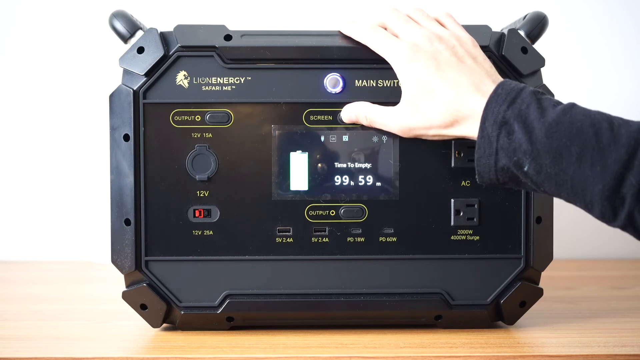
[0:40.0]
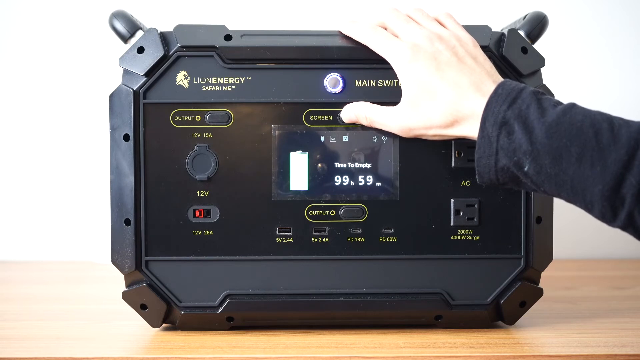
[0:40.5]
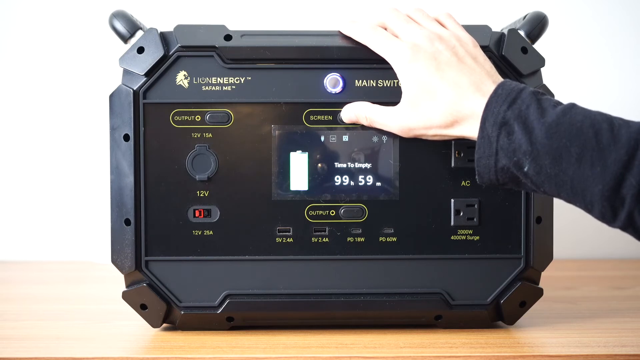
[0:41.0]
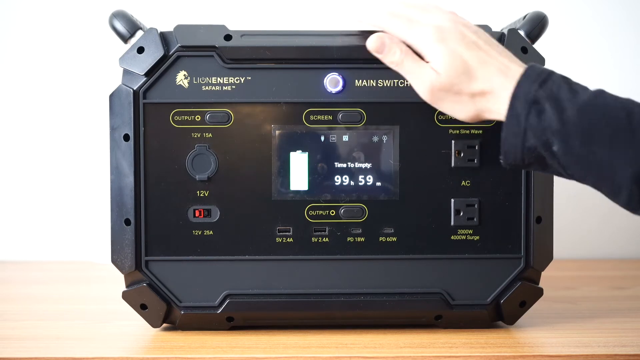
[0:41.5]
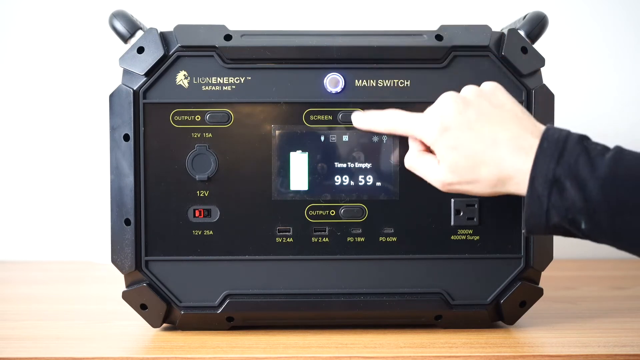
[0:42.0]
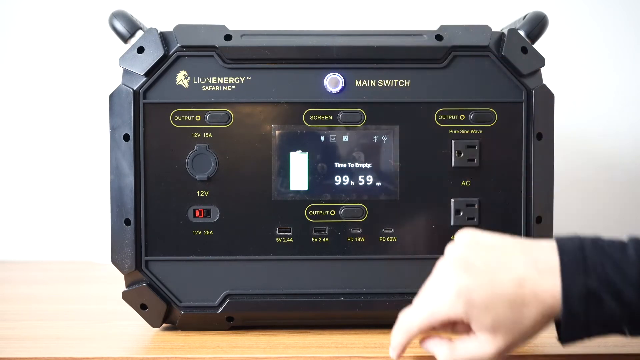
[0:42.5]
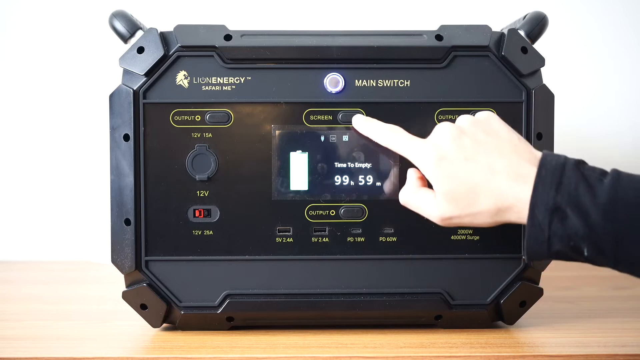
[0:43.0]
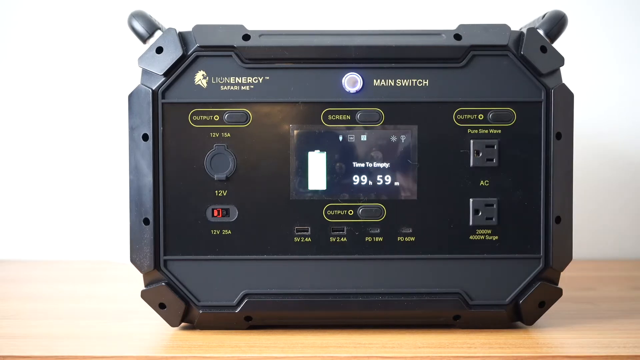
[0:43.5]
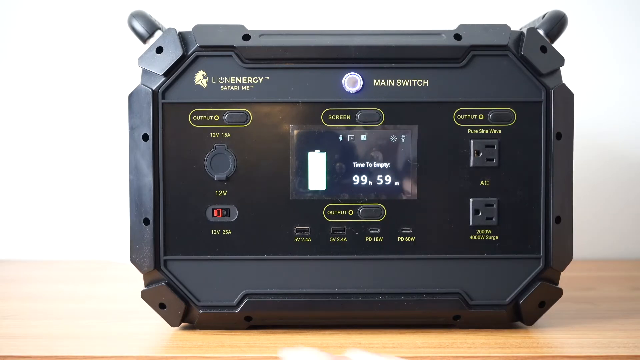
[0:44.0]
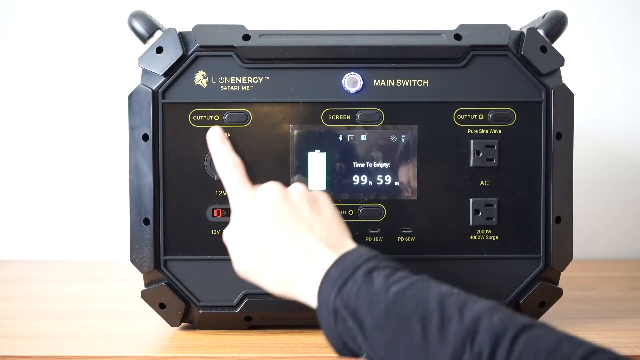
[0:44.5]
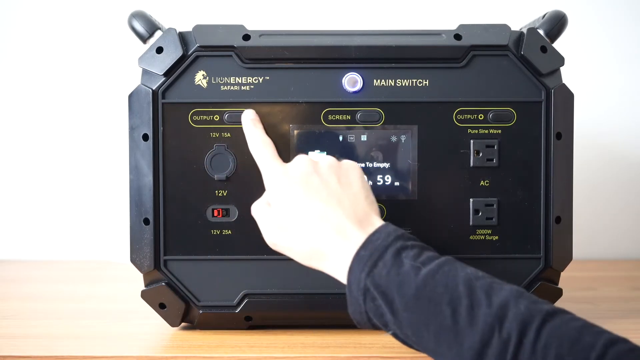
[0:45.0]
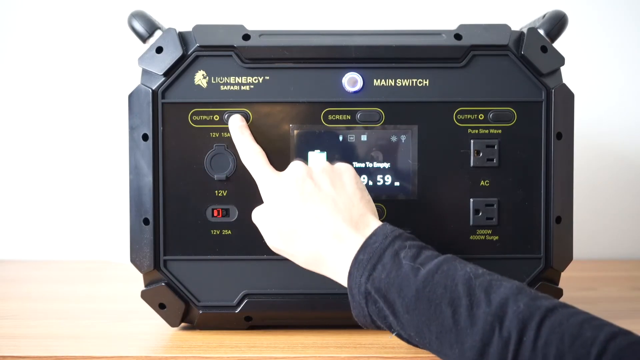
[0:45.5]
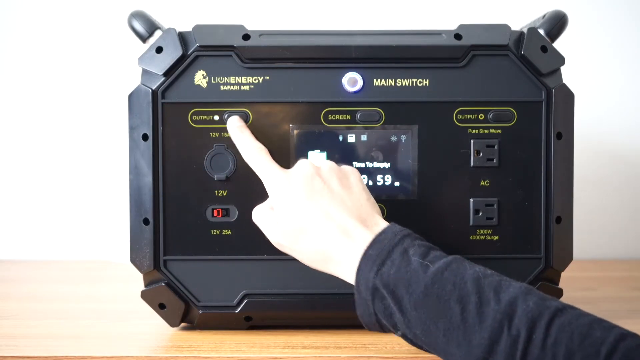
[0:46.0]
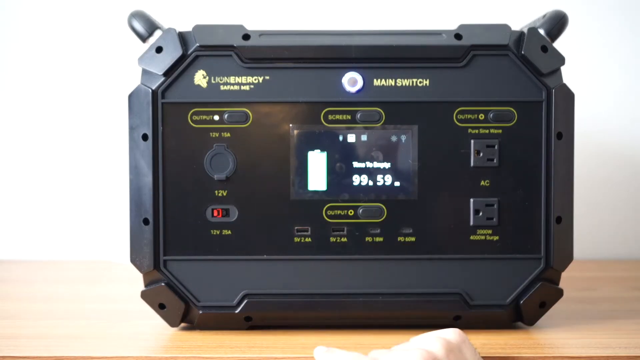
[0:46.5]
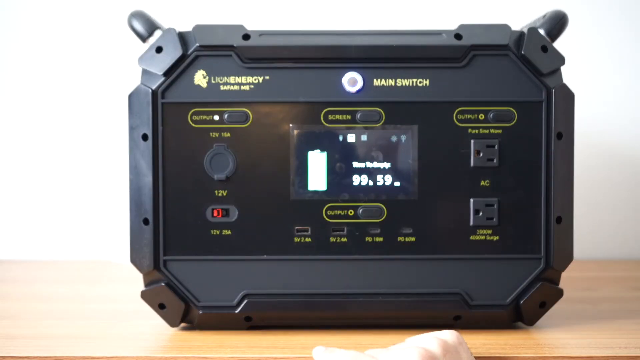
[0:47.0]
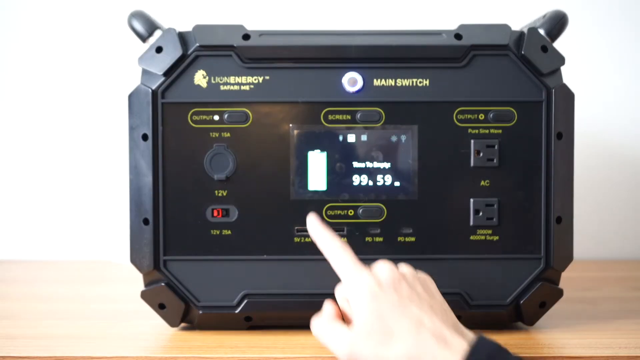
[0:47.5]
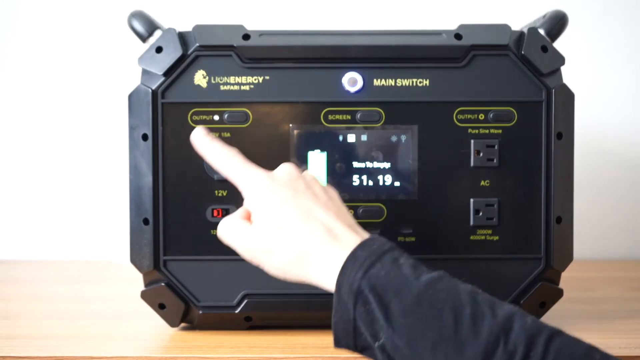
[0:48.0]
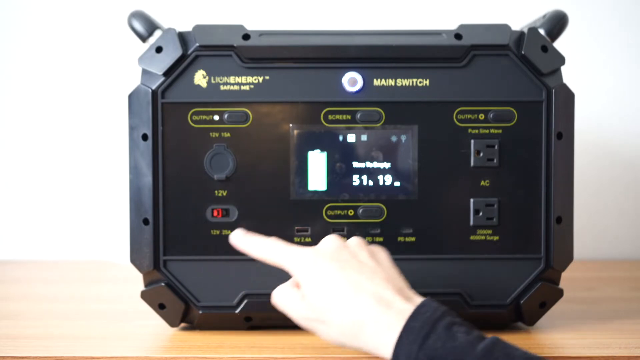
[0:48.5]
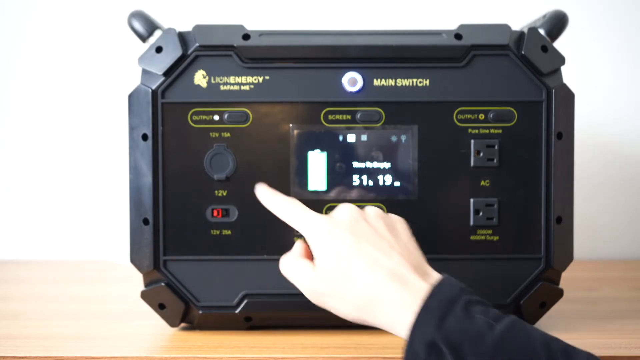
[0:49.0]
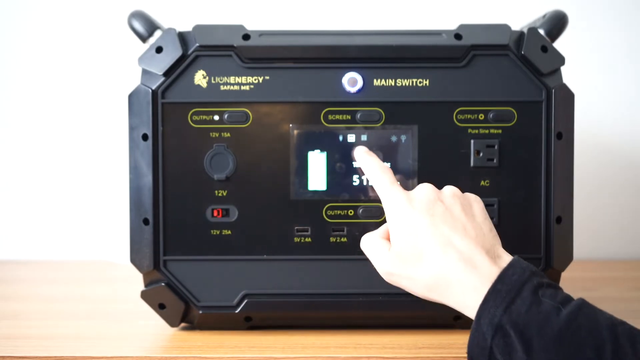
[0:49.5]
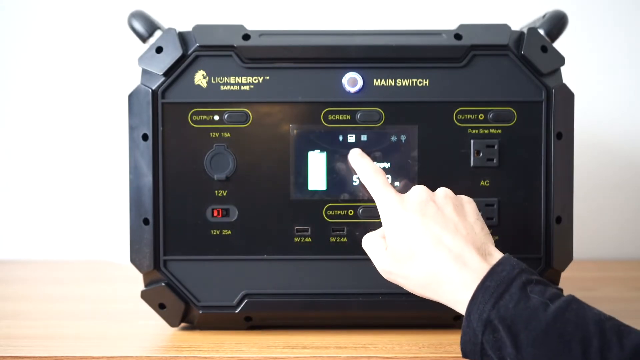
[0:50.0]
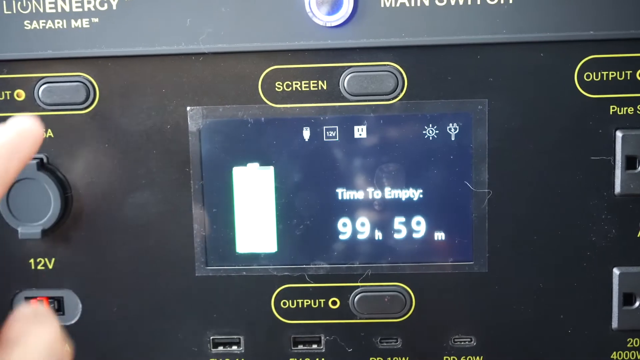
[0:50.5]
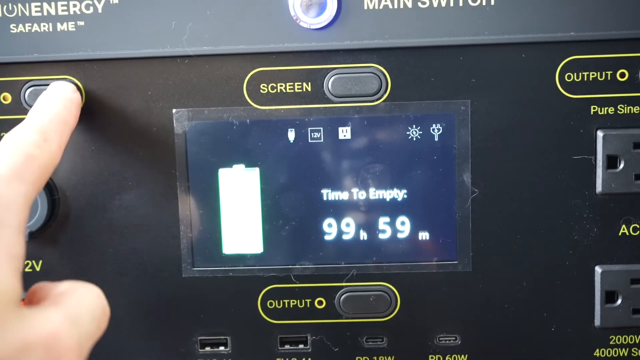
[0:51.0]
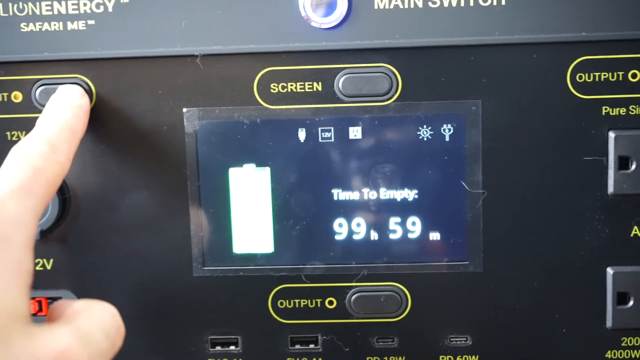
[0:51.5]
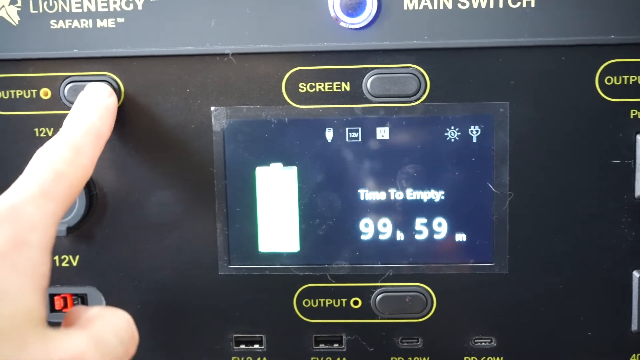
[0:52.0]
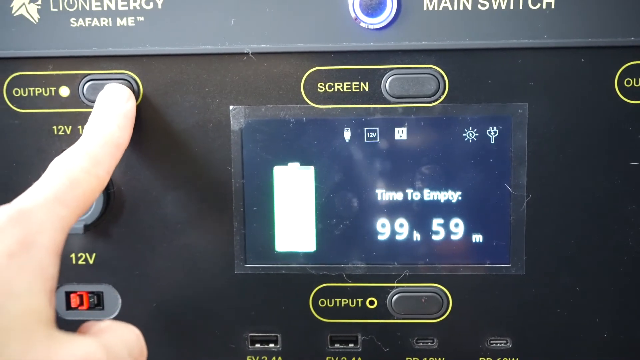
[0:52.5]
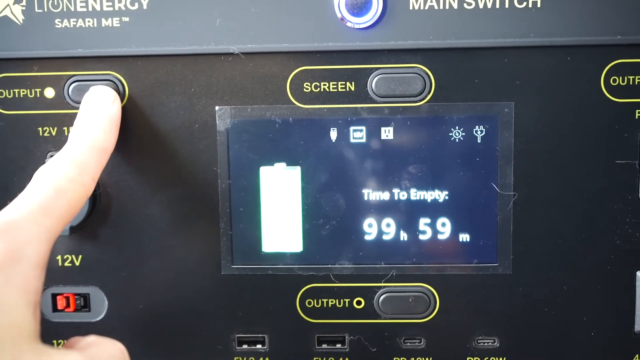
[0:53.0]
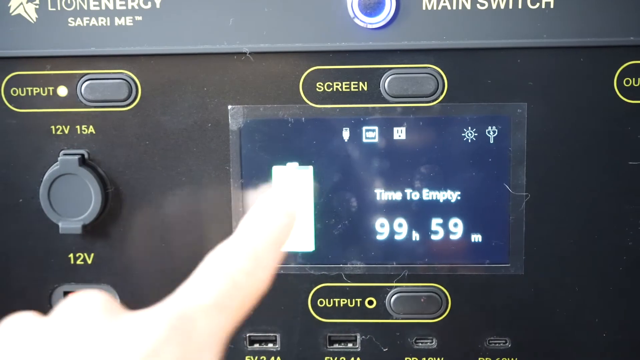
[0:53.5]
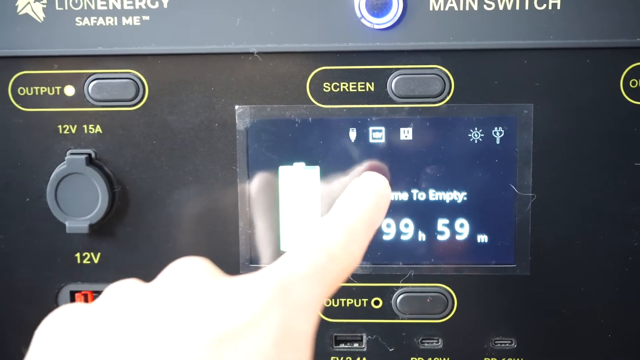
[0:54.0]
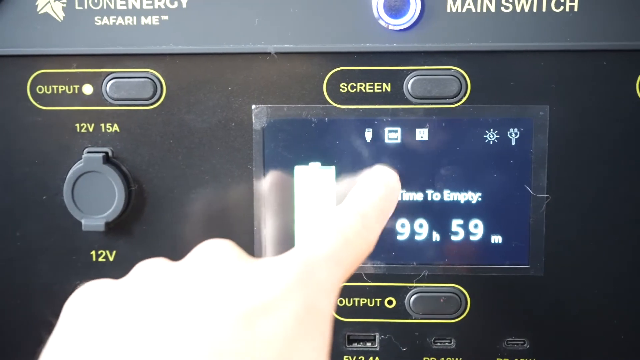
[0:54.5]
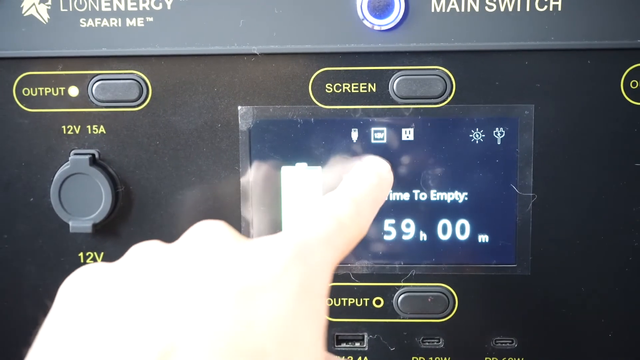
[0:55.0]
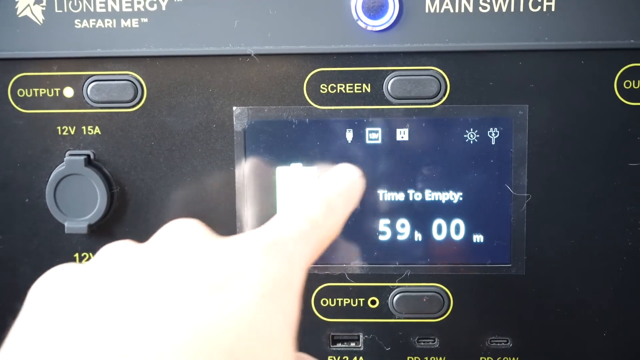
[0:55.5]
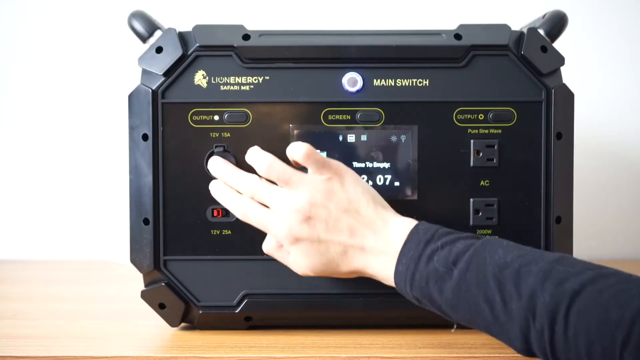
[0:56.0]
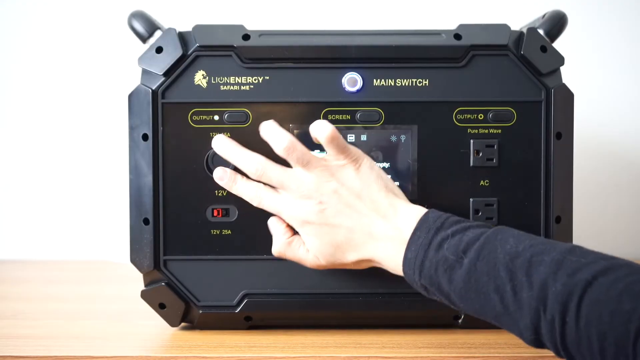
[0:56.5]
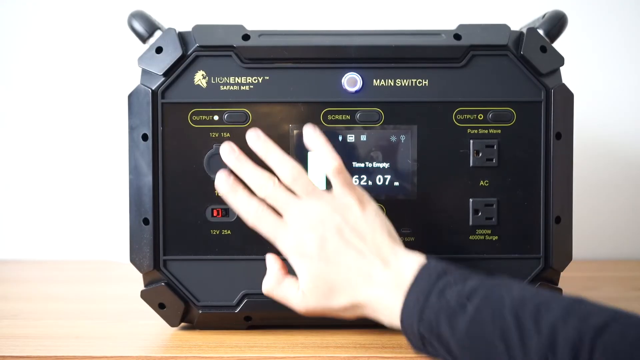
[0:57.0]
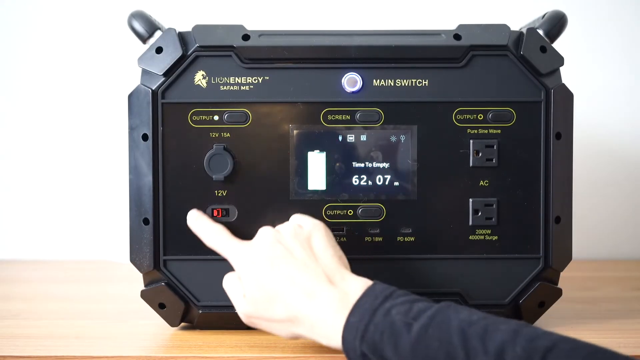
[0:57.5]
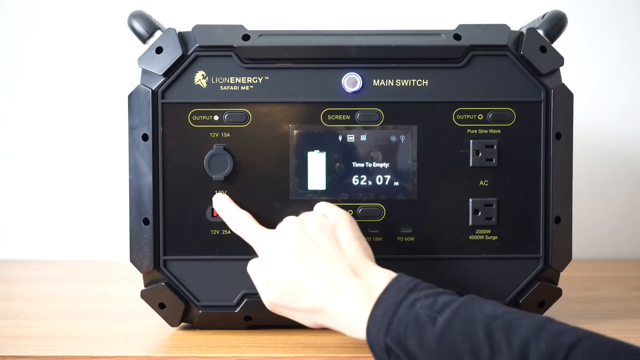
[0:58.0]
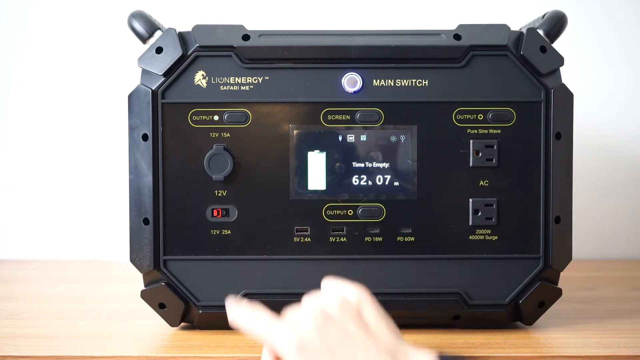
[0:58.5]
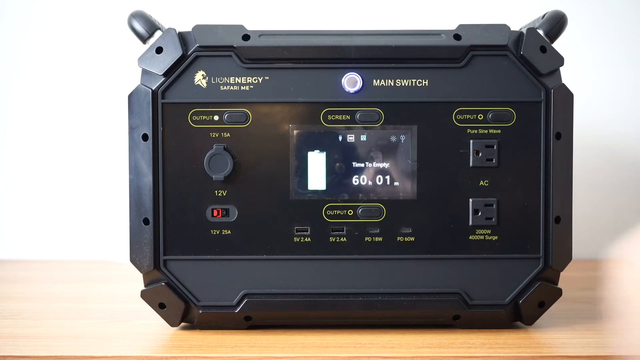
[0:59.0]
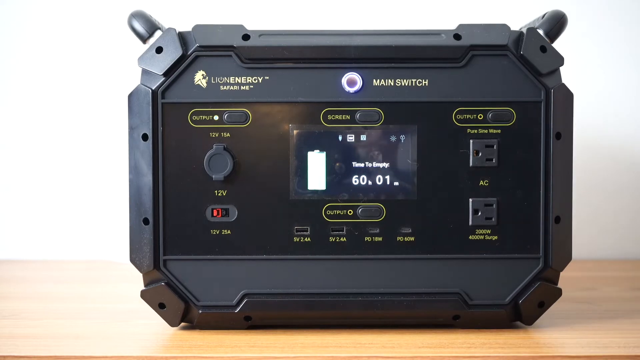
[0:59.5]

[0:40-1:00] A machine or device has text at the top that says "Lion Energy Safari Me" and a little lion icon. A little section that looks like a light button says "Main Switch." There are several buttons: an output button, a screen button, another output at the bottom center and one at the top right, plus a 12 volt, an AC, and a 2000-watt, 4000-watt surge outlet. He pushes the button, then goes to the output button and presses it in, and a light turns on next to it. He moves his finger roughly in a circle and points to an area on the screen. In a close-up of the screen, he presses the output button again and the screen changes. He points toward one of the logos on the screen. The screen seems a bit flimsy, looking like plastic when he touches it. He then touches the 12 volt section on the left side of the machine and roughly circles around the little switch below it.